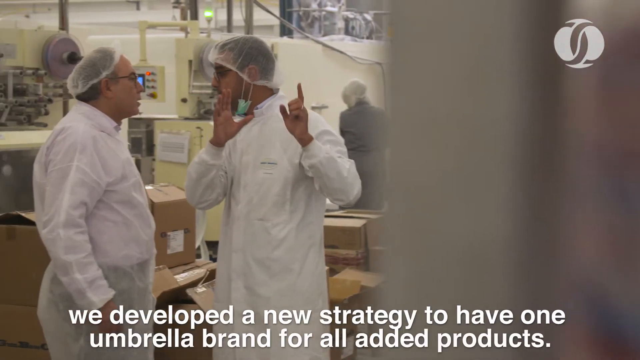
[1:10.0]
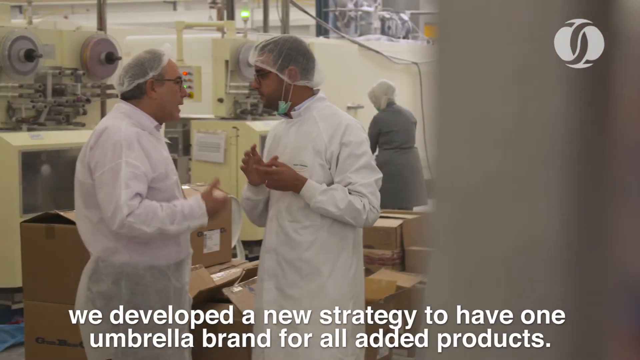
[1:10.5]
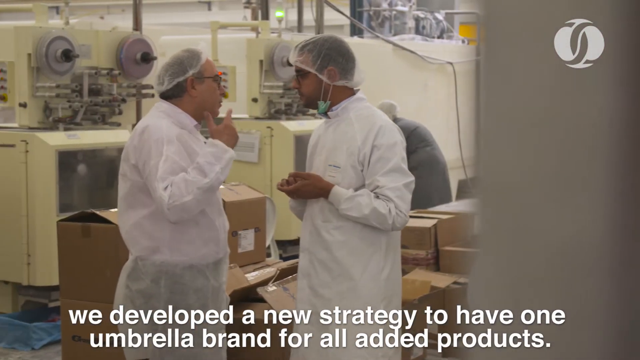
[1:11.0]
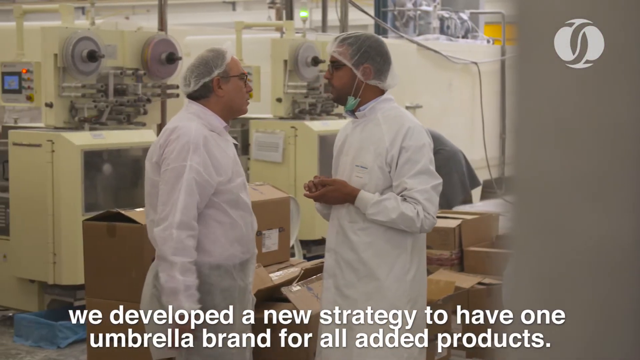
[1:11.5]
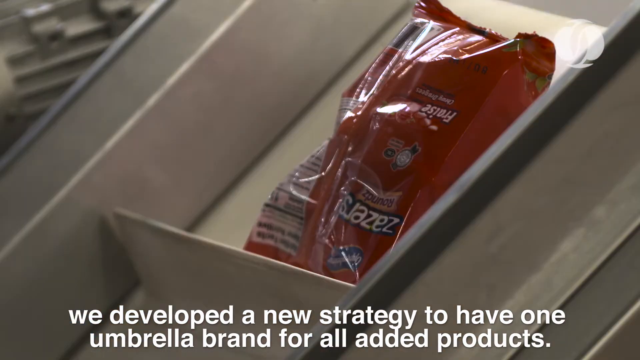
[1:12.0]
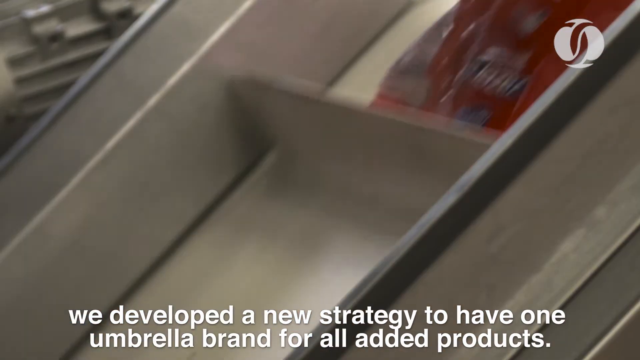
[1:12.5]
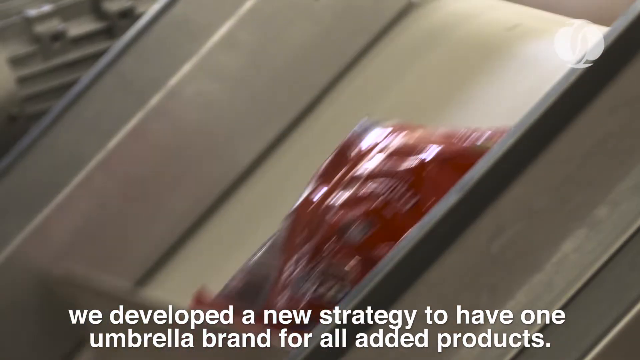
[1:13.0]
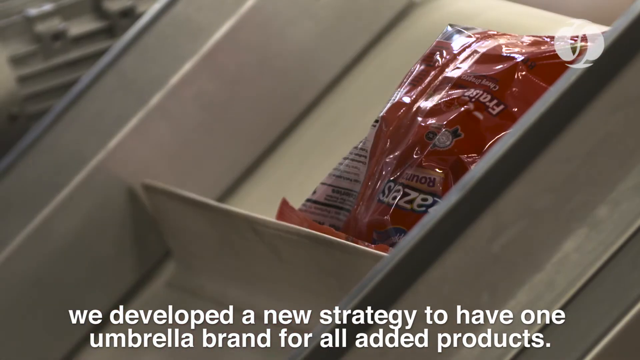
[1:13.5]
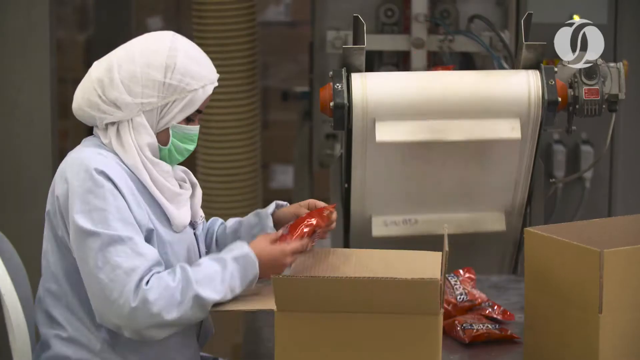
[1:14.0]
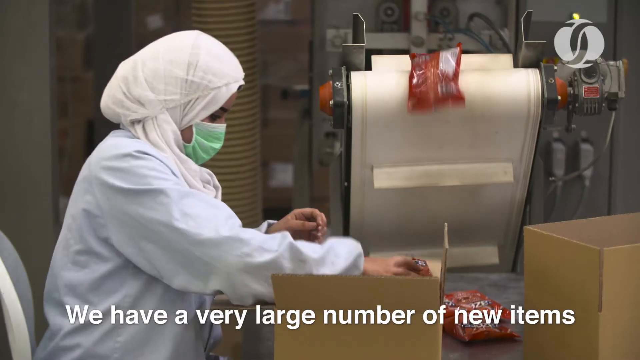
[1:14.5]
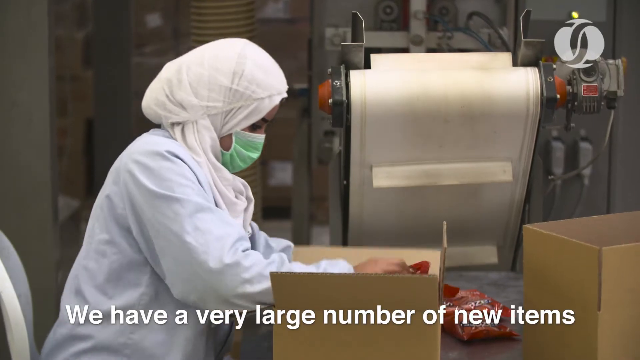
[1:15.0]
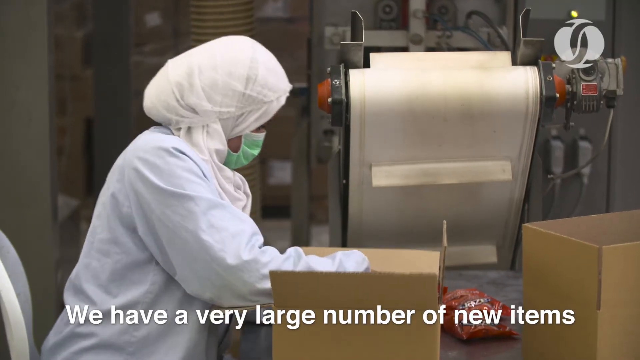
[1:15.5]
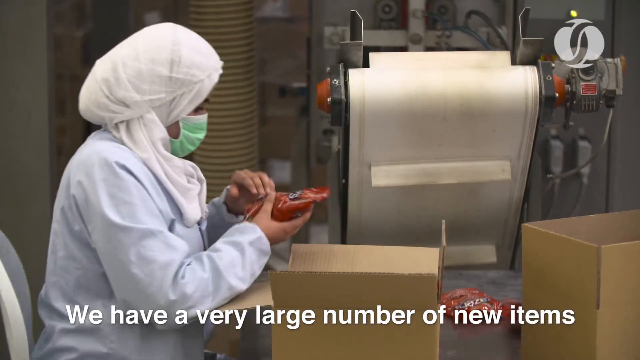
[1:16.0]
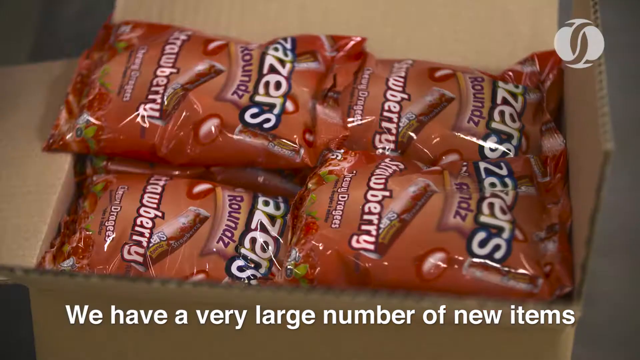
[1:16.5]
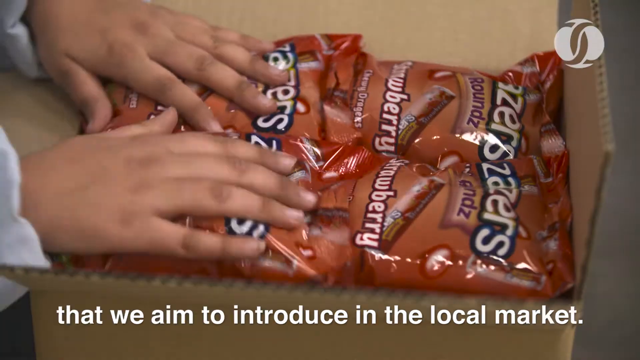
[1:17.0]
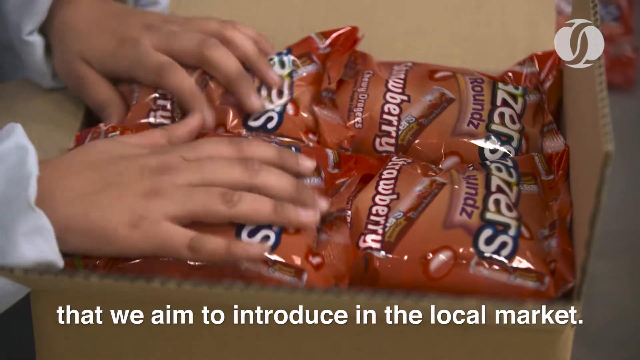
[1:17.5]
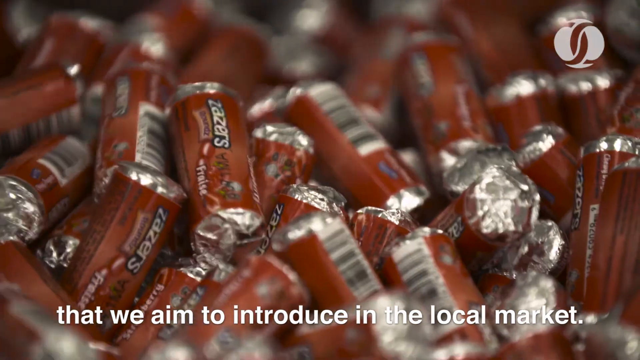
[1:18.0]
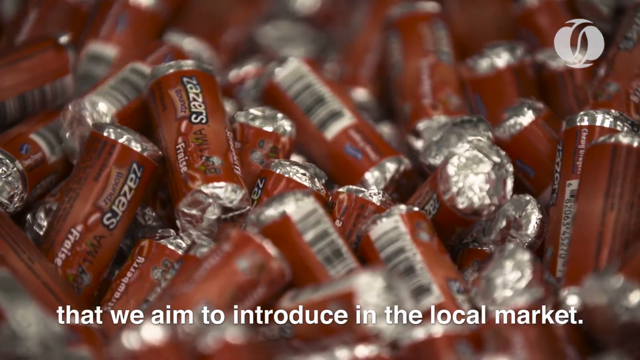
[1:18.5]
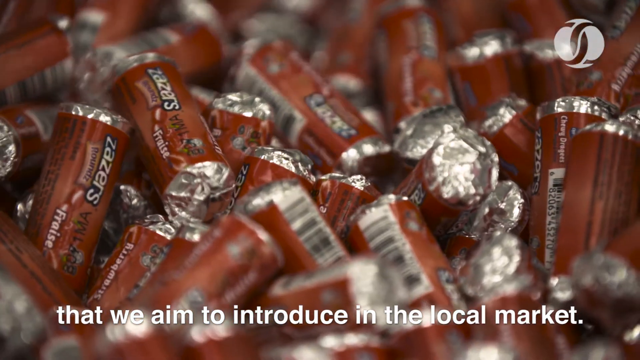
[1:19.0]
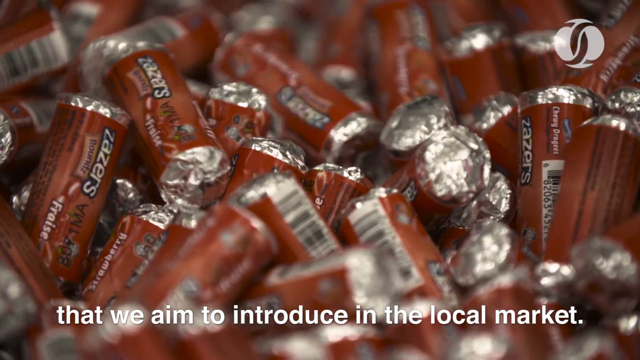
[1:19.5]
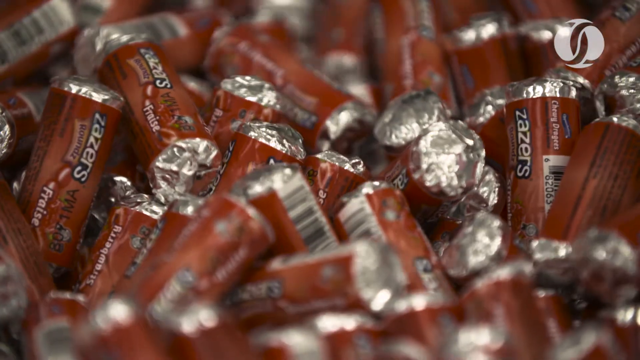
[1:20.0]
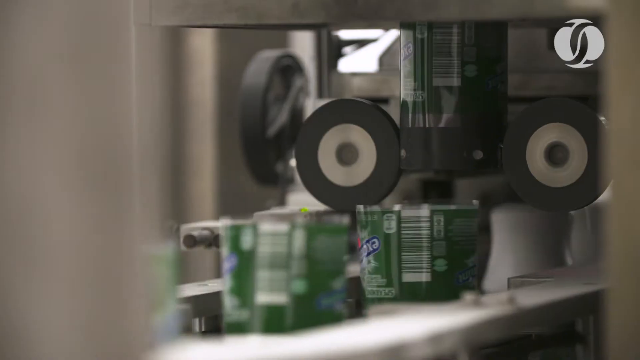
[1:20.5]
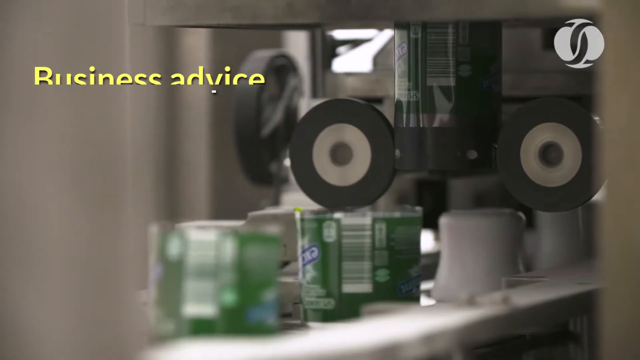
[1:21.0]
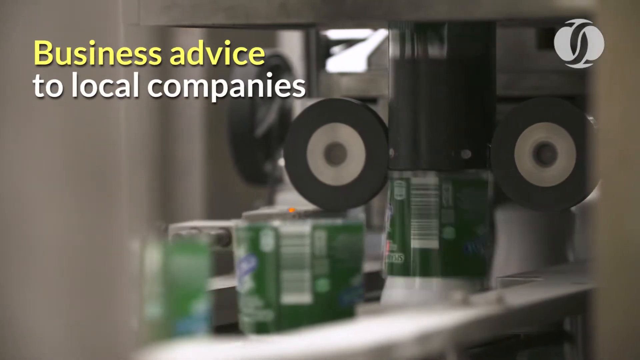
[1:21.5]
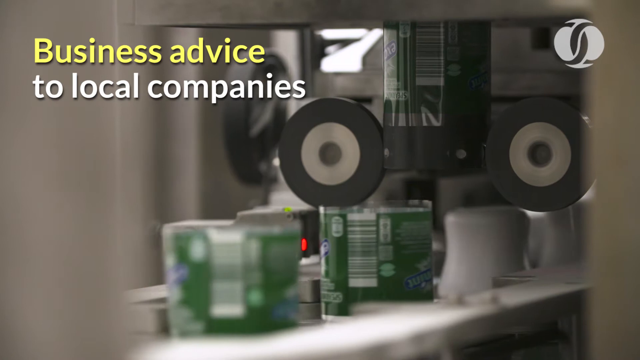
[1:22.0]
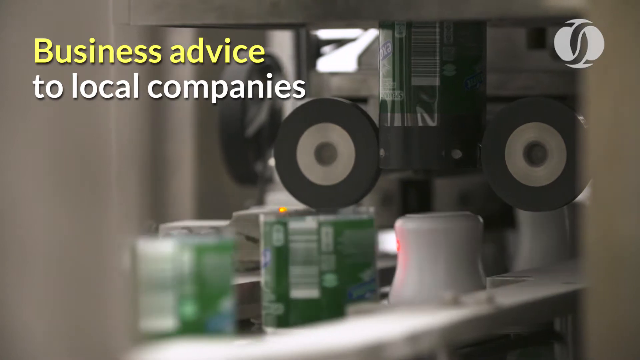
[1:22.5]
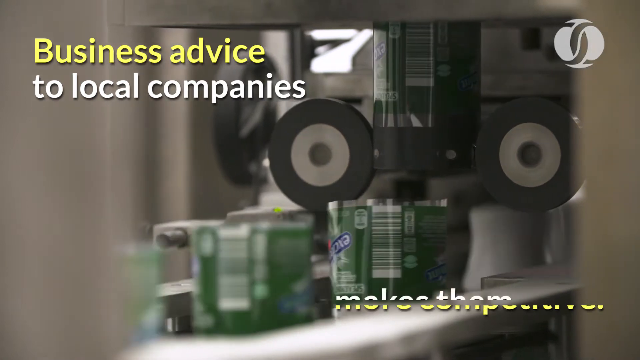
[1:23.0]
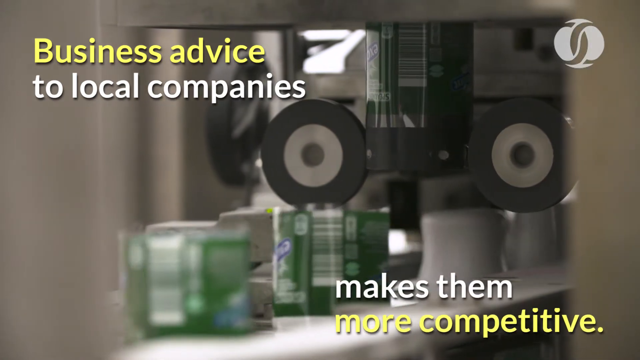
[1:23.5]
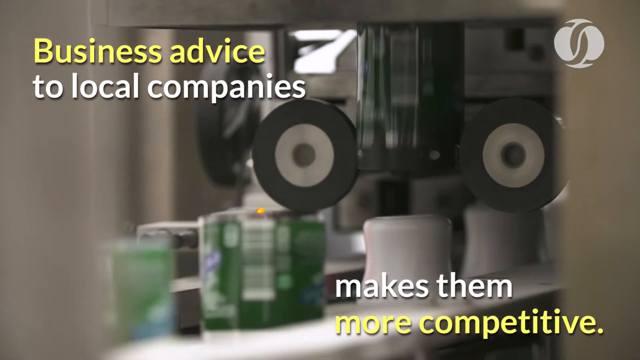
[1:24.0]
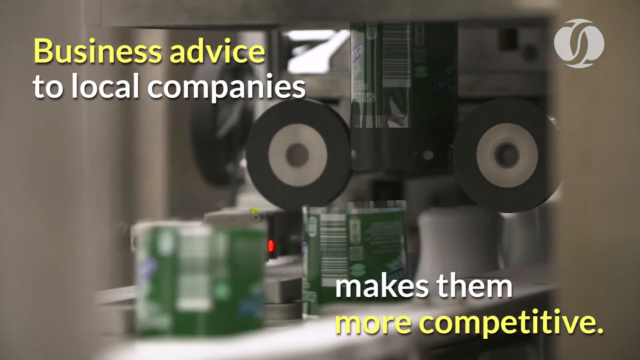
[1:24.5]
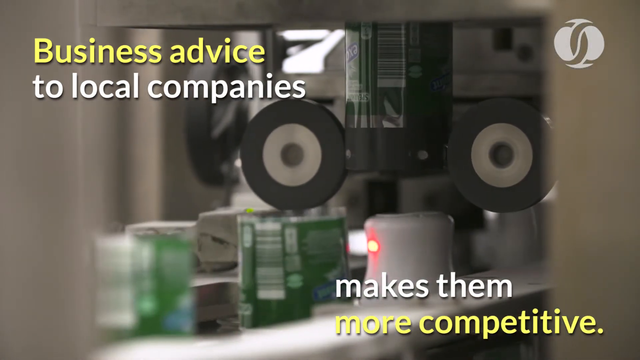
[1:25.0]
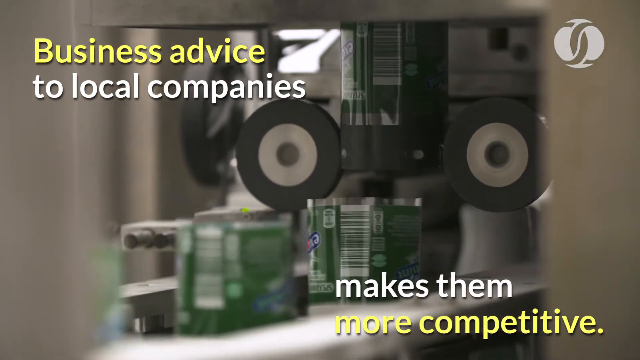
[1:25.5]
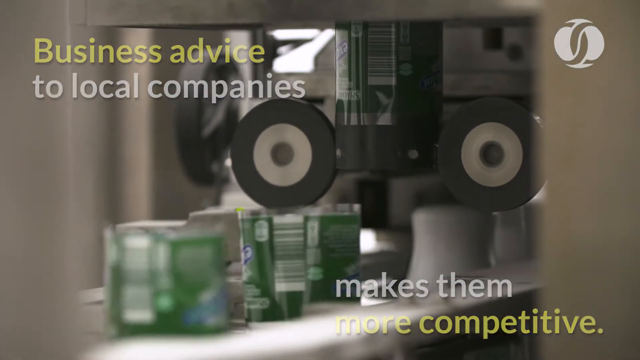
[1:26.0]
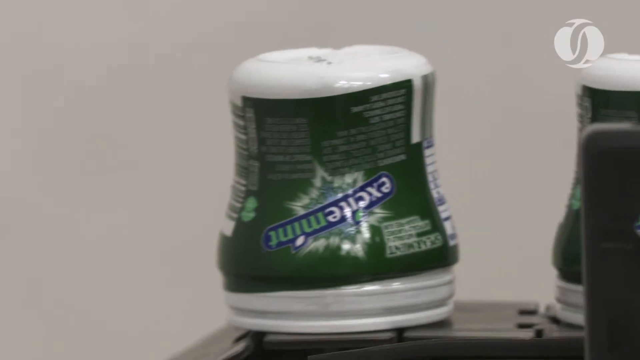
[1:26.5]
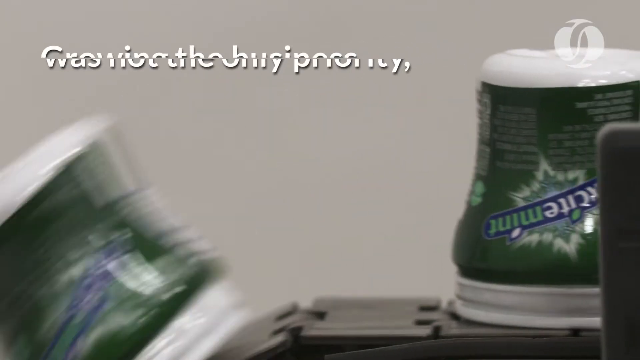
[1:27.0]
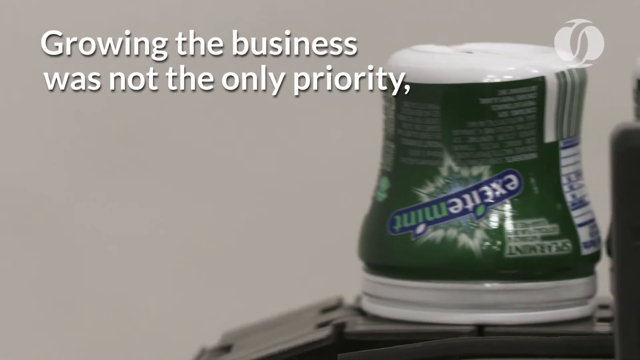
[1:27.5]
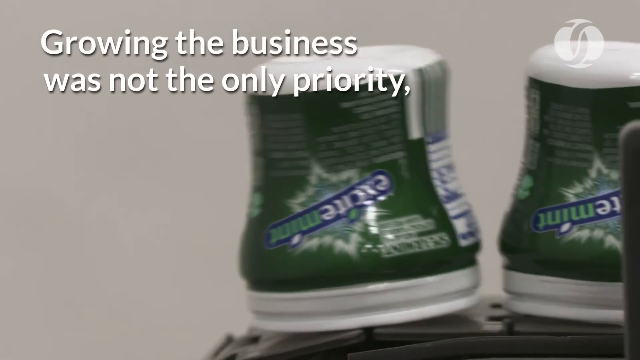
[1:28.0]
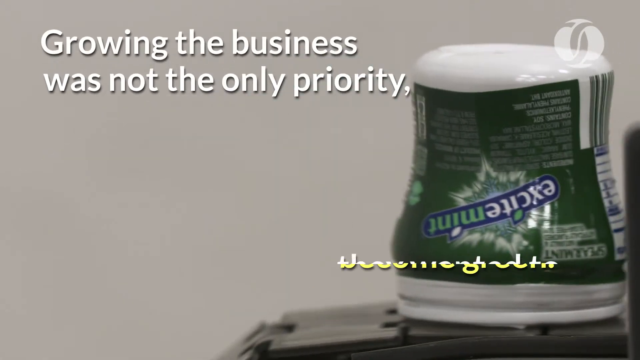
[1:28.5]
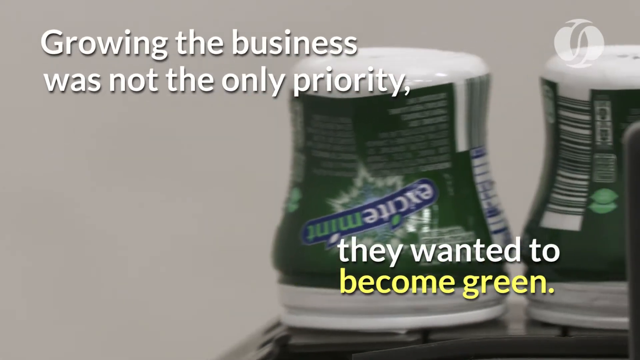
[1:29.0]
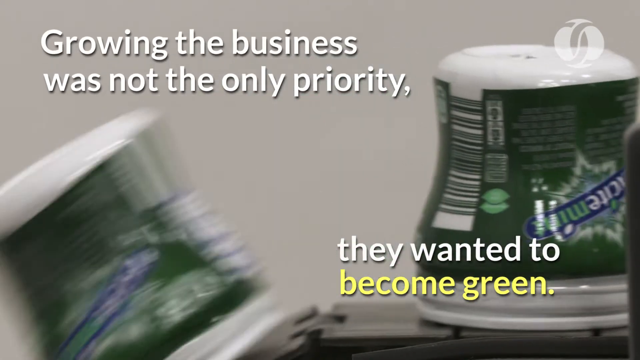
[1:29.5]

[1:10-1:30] The factory is shown with the text "we developed a new strategy to have one umbrella brand for all added products." The man wears a hat and a long-sleeved white lab coat that reaches to about his knees. He says, "we have a very large number of new items that we aim to introduce in the local market." Lines appear: "Business advice to local companies might make them more competitive" and "Growing the business was not the only priority. They wanted to become green." He is kind of talking to a colleague, standing rather close to him; the colleague also wears a white coat and a clear head wrap. The factory is very brightly lit, with gum-making machines everywhere and tons of gum, probably hundreds of millions of pieces, in all different colors.